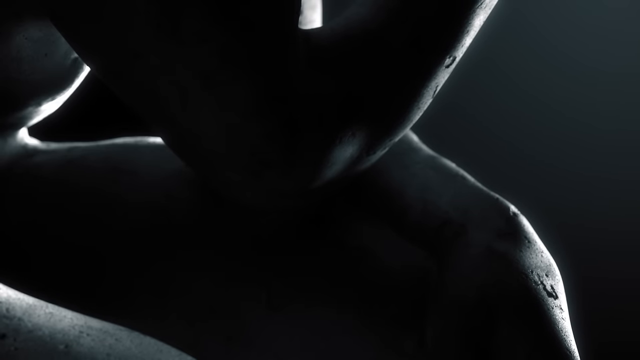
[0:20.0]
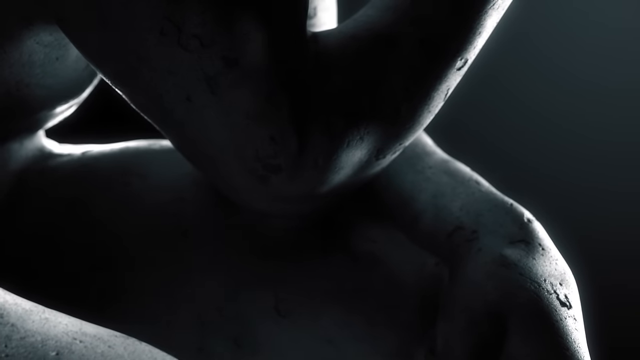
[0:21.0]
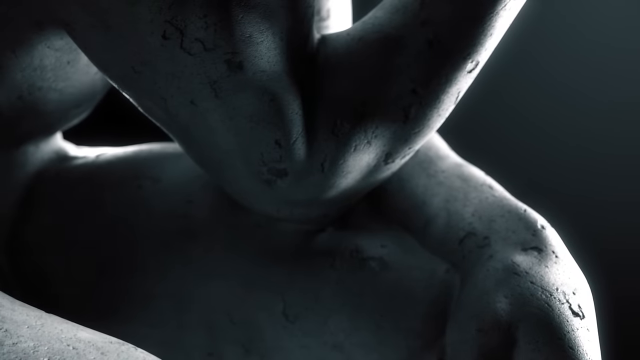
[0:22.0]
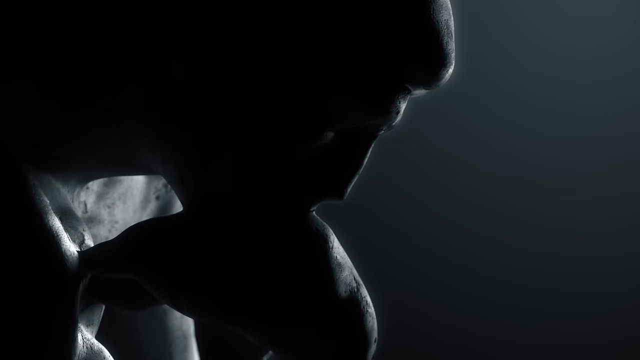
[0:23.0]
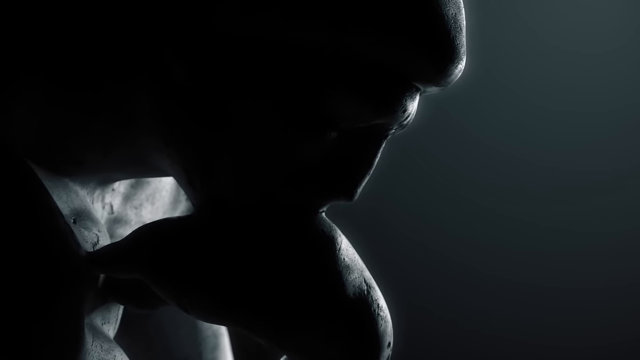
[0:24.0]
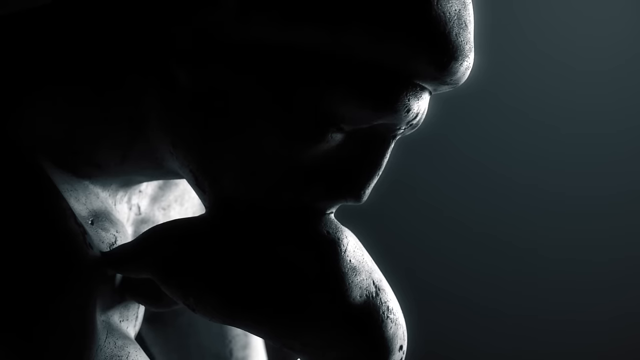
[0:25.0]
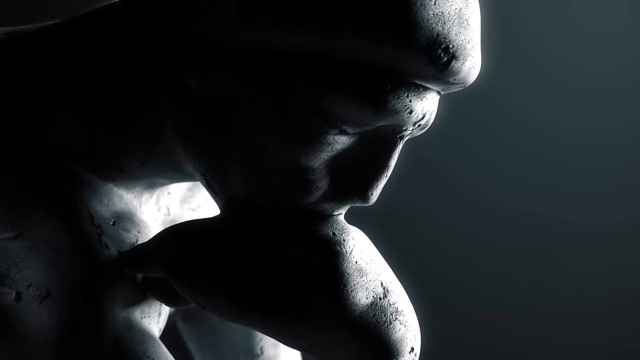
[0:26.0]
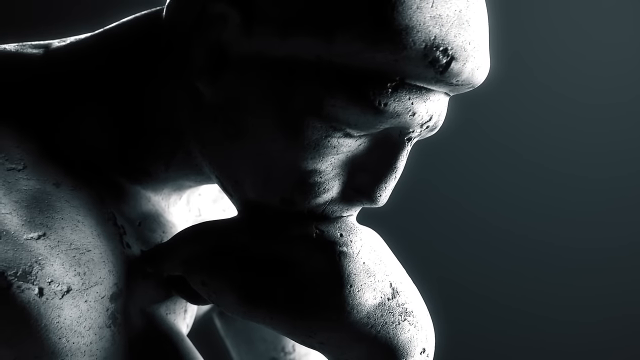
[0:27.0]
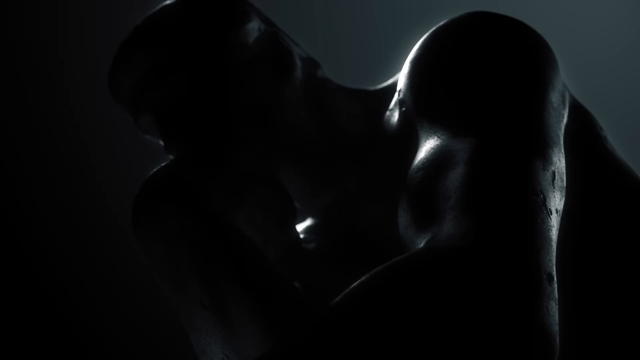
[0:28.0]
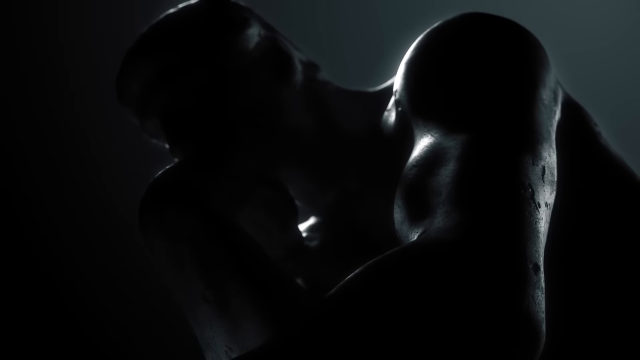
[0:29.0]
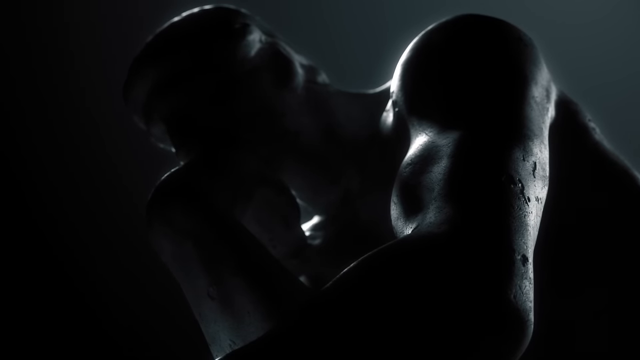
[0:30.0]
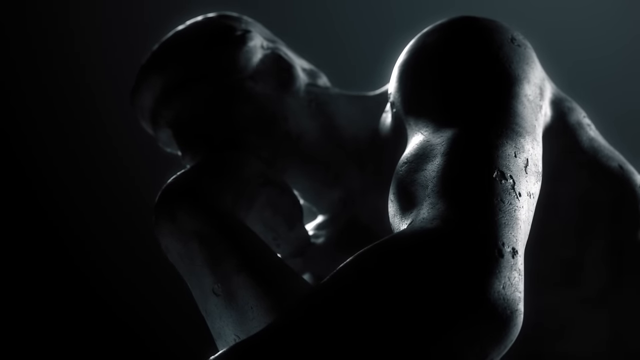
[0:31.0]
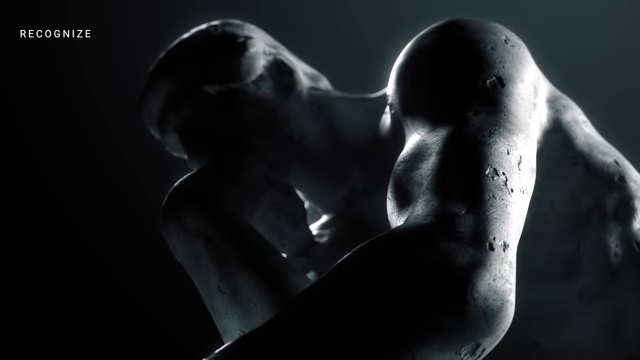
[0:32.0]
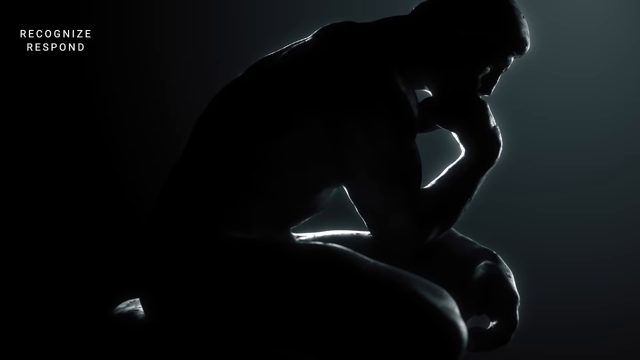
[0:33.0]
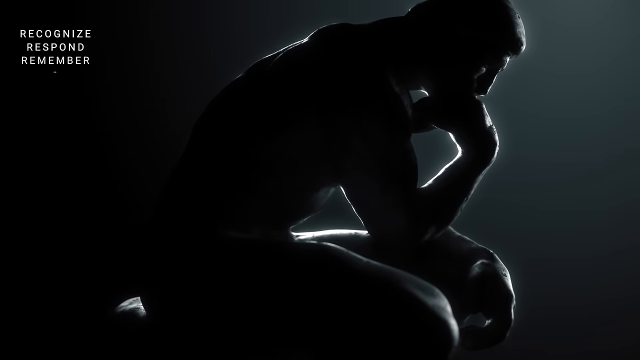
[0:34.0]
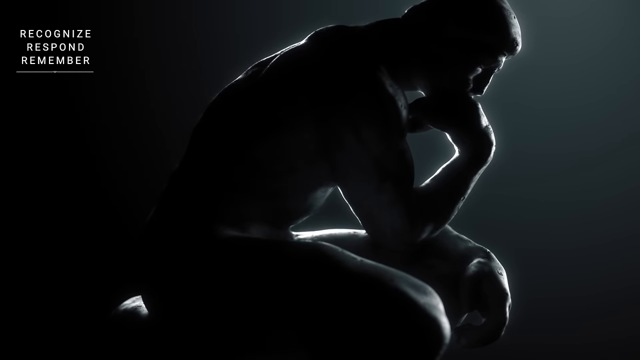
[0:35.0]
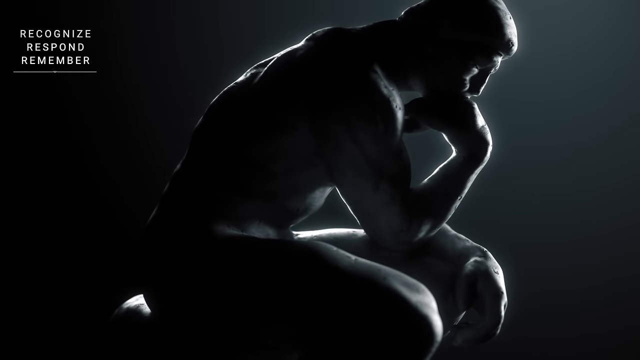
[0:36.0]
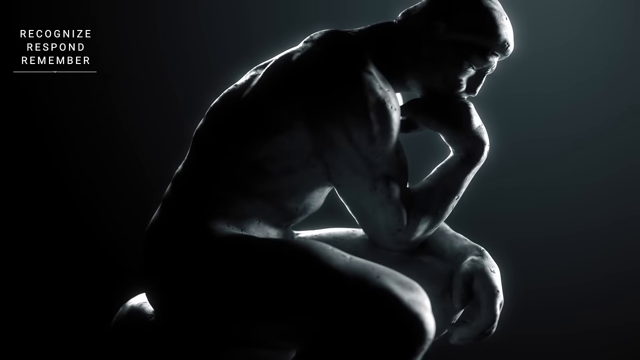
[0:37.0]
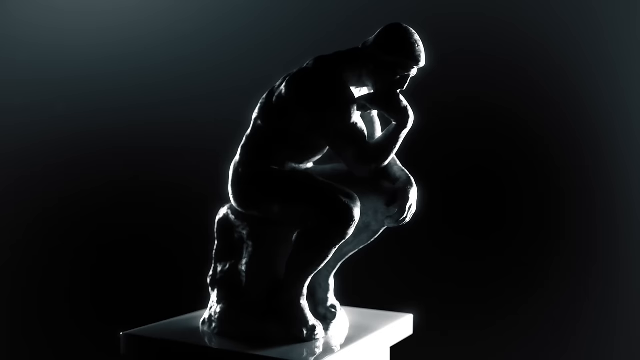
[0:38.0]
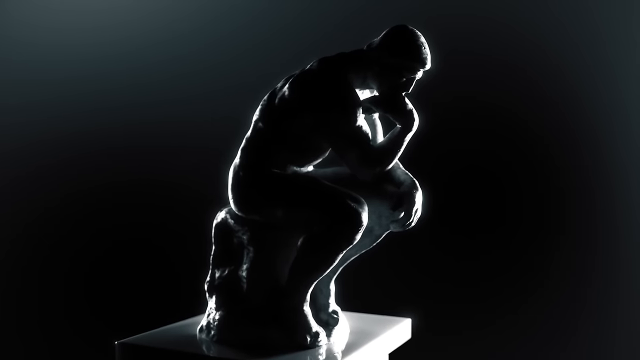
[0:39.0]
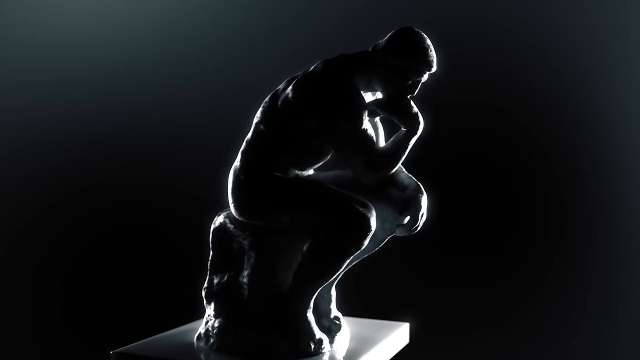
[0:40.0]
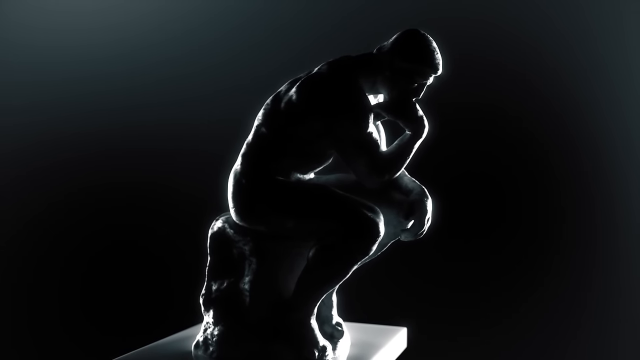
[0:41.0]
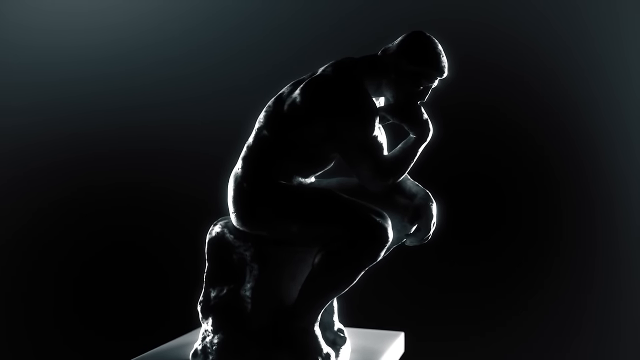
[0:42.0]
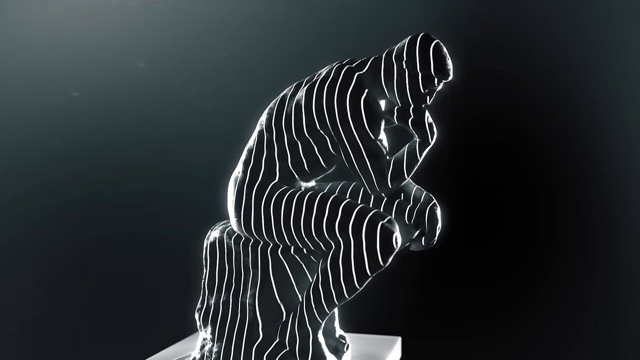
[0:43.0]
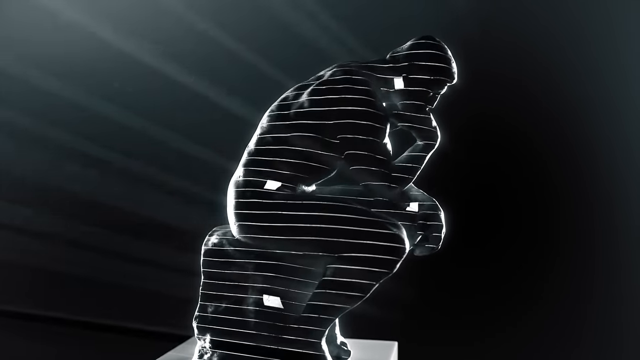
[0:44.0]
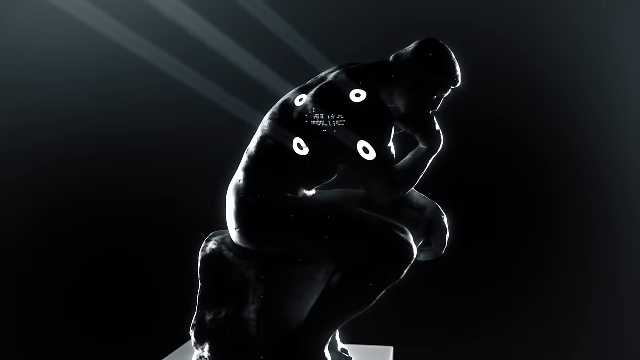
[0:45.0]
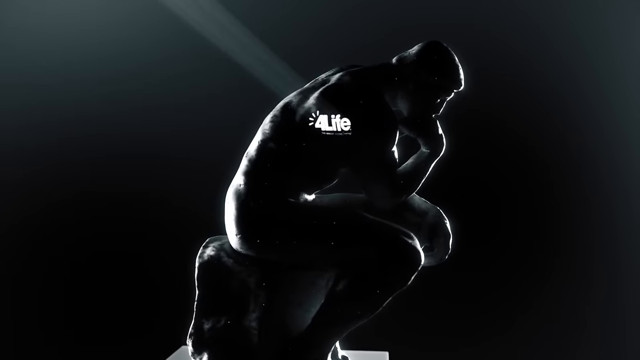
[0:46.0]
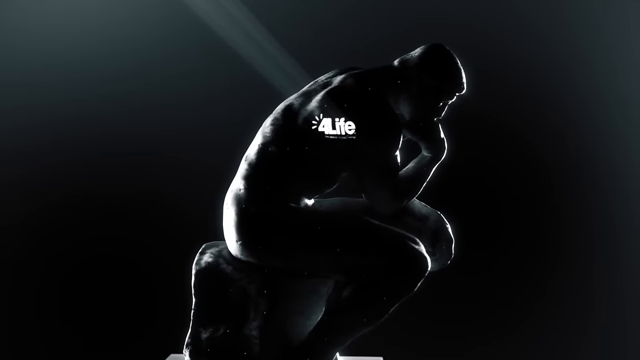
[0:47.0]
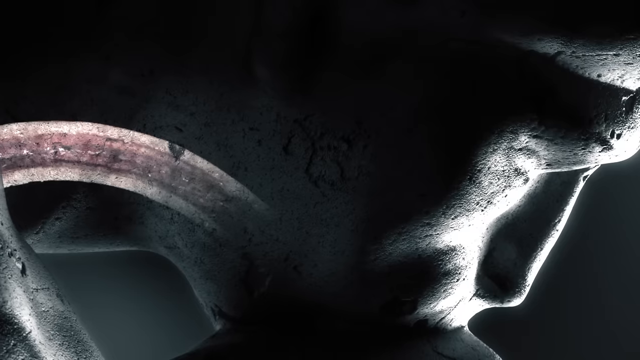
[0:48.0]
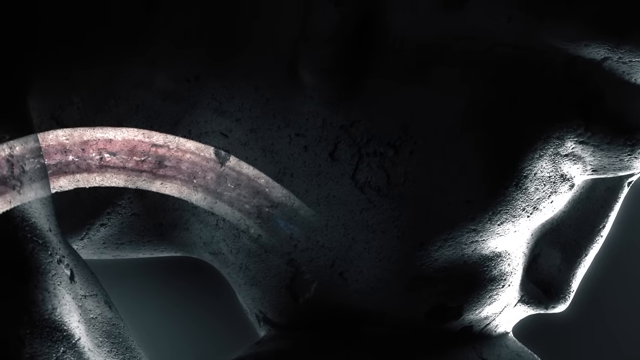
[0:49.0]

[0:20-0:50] Against a light gray background, a statuesque figure in dark black shading is shown, with light shining and gleaming off it at various moments. It sits in the pose of the iconic Thinker statue: the head rests on the hand and wrist, the bent arm rests on the knee, and the muscular back leans forward. Text in the upper left-hand corner reads "recognize, respond, remember." The video gradually unveils more of the statue, adding more light and showing more of the overall image as the view pans backwards. Various digital scan lines then pop up all over it, and a spotlight hits it reading "4Life," appearing in what looks like a corporate logo style.